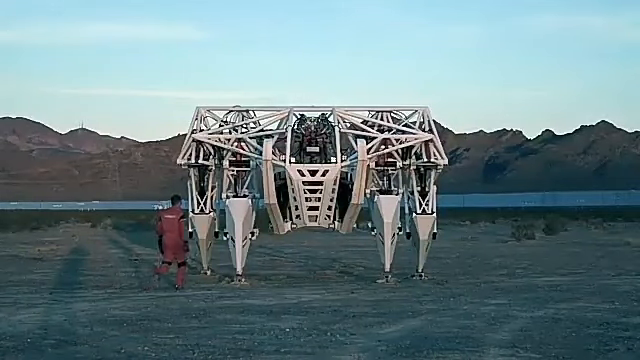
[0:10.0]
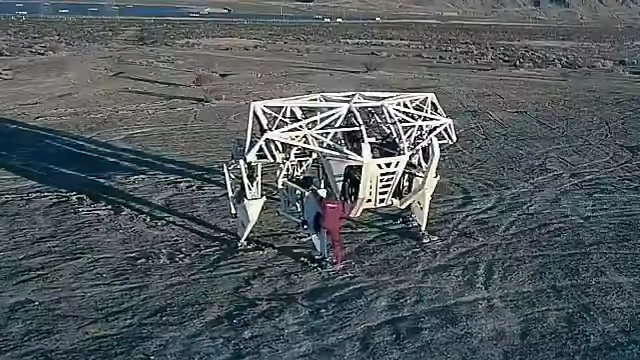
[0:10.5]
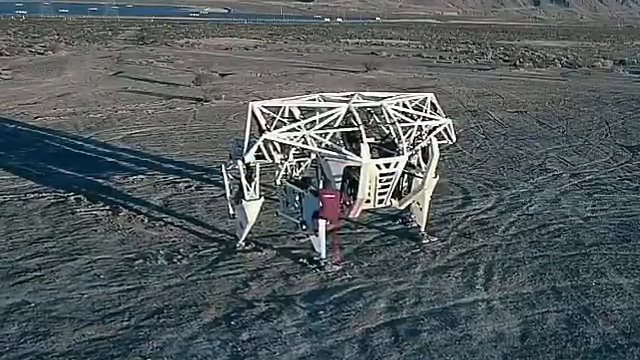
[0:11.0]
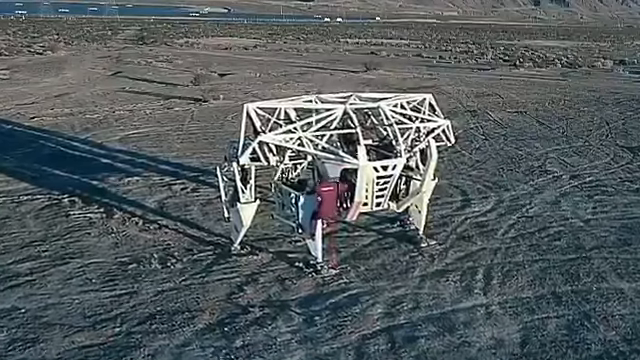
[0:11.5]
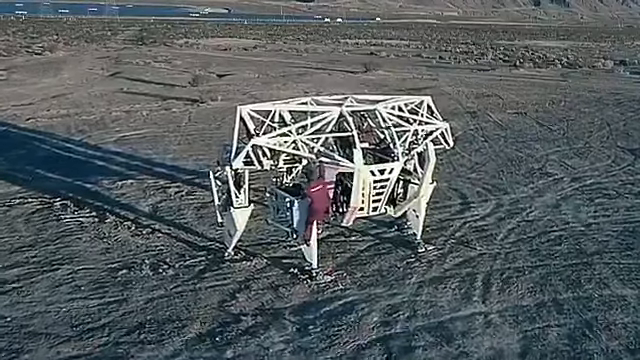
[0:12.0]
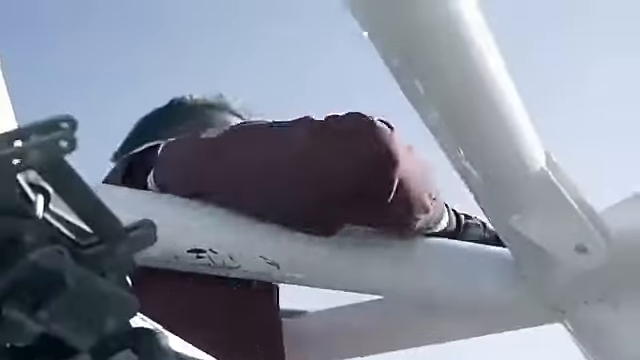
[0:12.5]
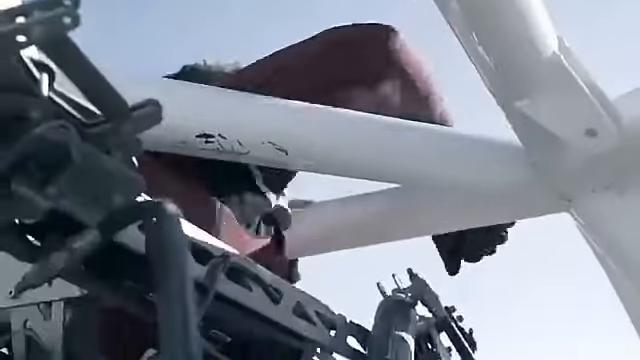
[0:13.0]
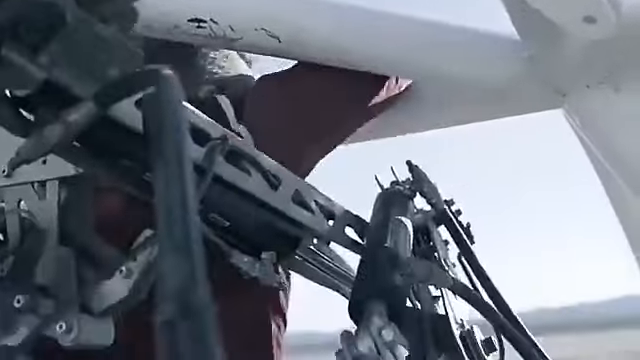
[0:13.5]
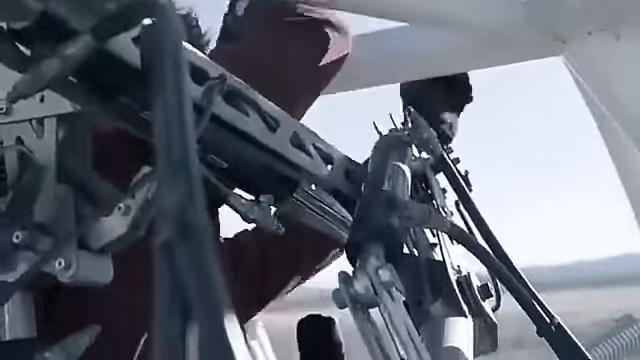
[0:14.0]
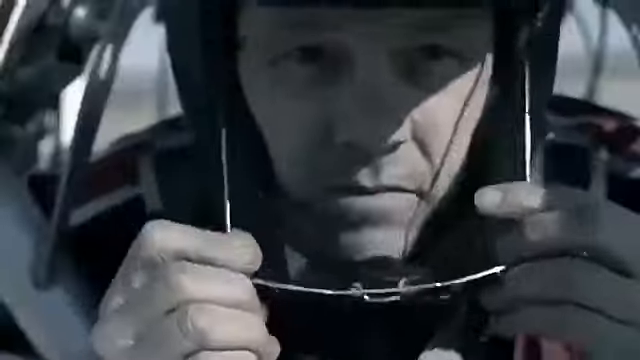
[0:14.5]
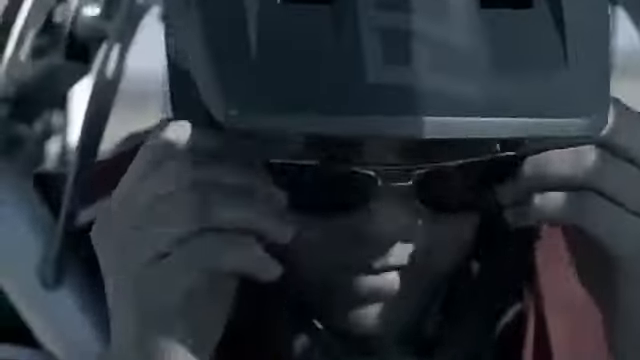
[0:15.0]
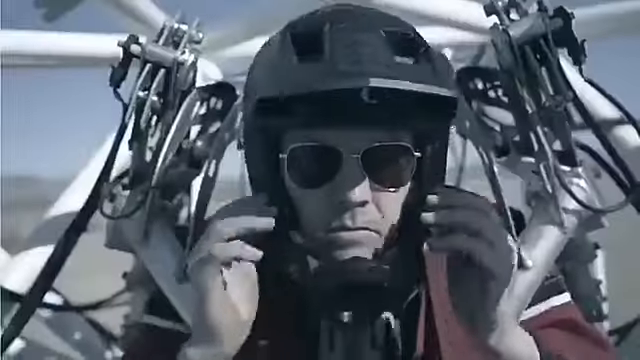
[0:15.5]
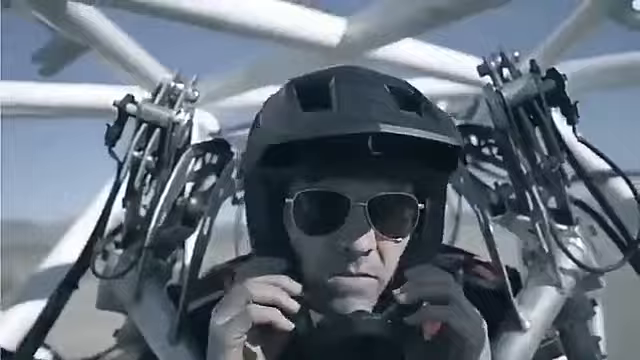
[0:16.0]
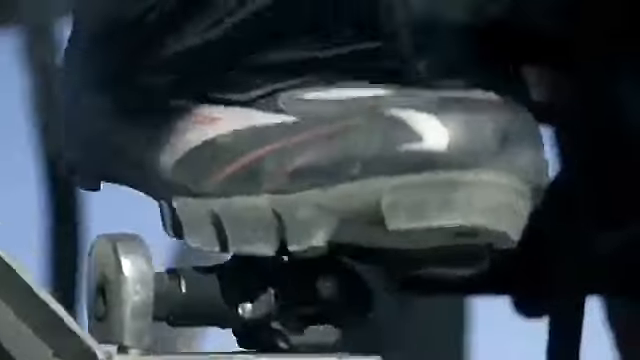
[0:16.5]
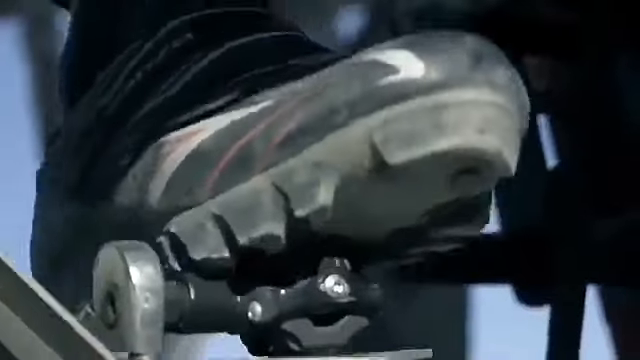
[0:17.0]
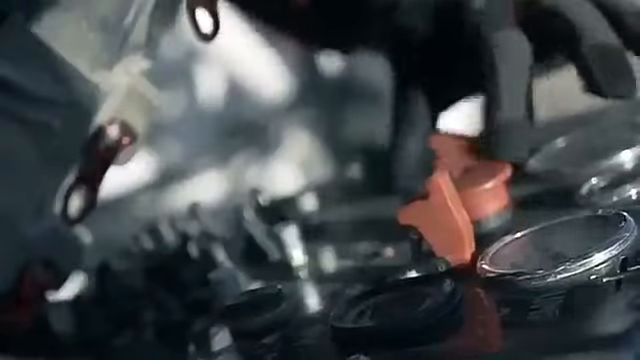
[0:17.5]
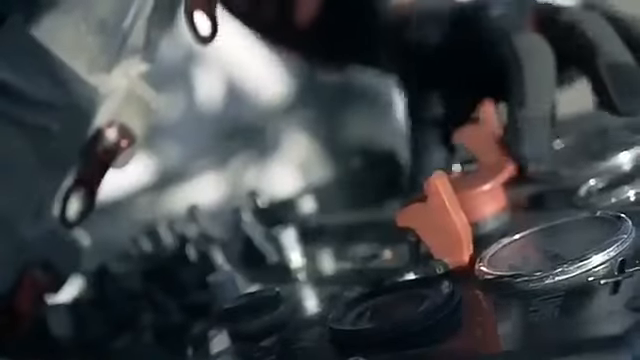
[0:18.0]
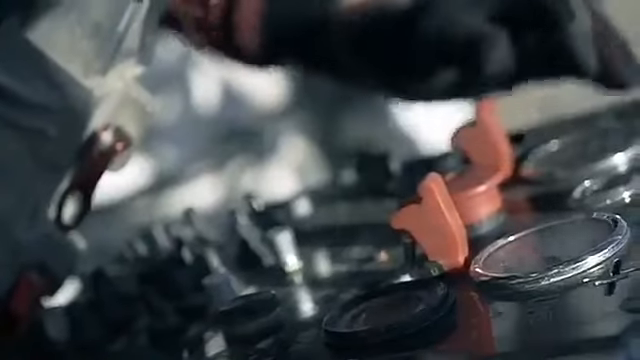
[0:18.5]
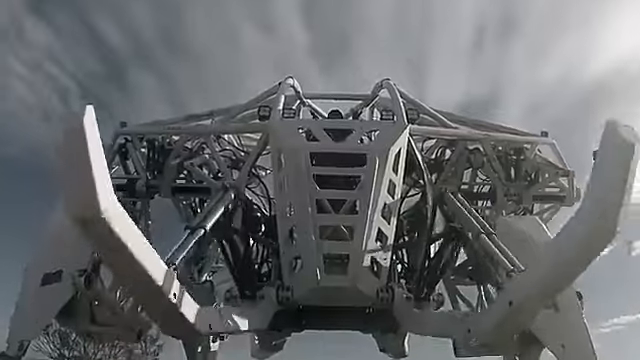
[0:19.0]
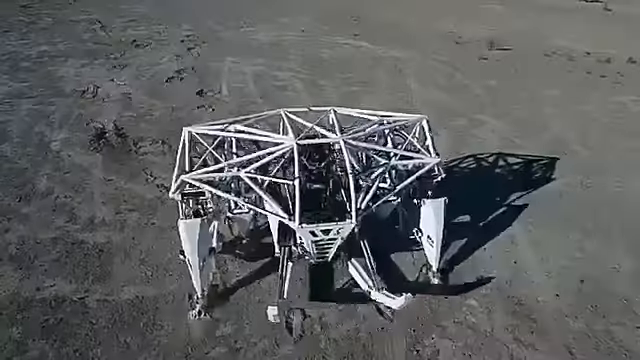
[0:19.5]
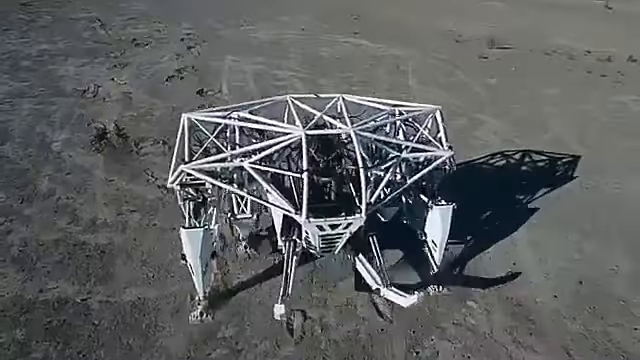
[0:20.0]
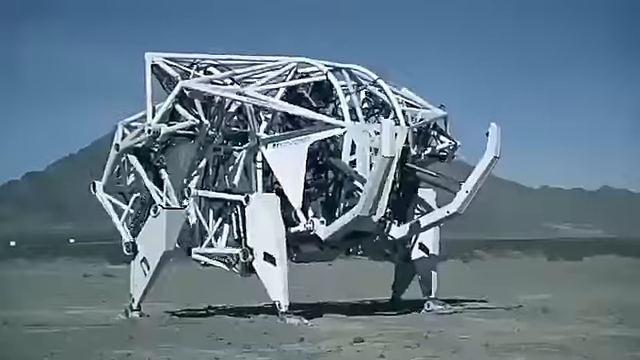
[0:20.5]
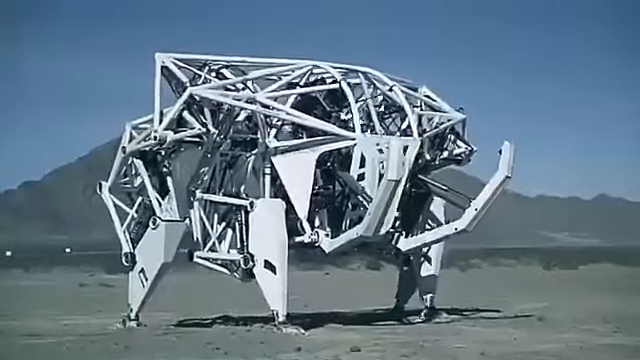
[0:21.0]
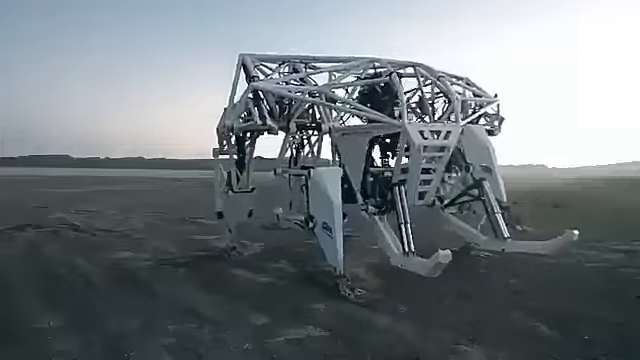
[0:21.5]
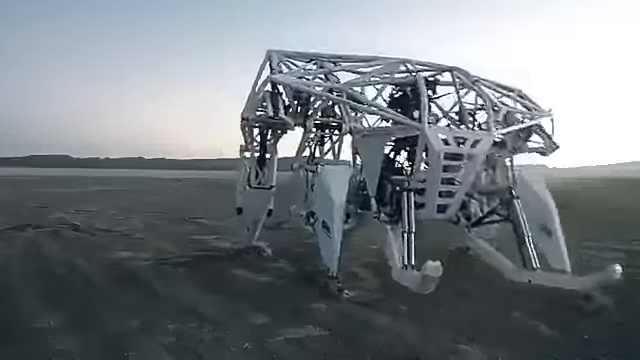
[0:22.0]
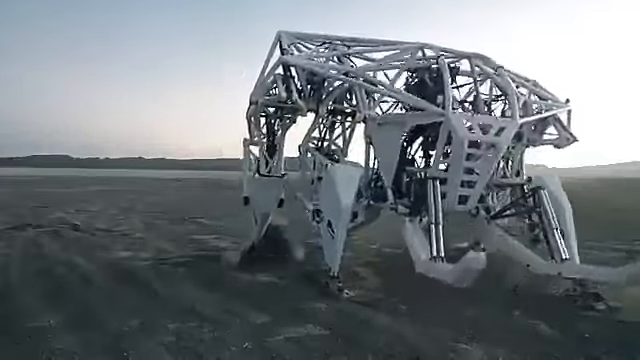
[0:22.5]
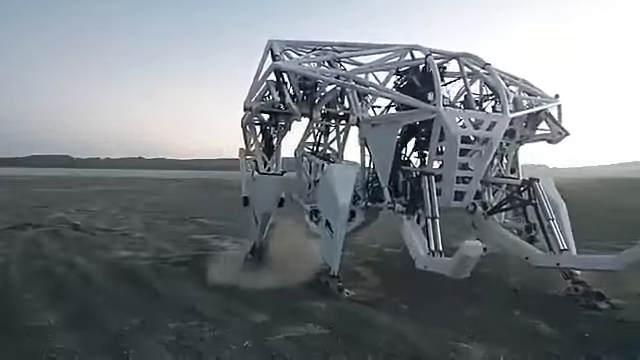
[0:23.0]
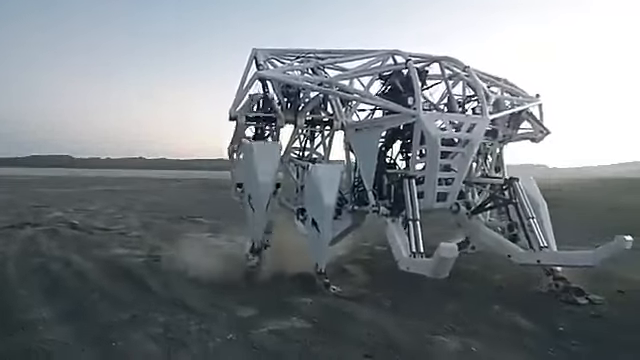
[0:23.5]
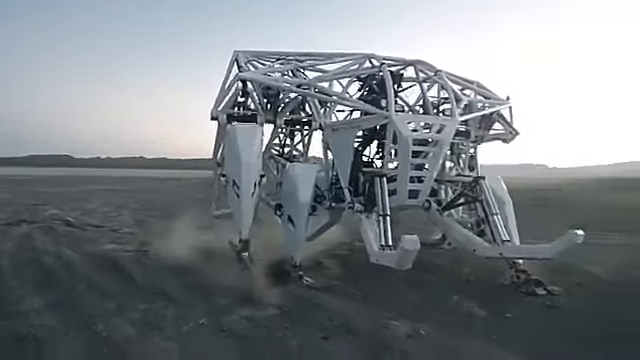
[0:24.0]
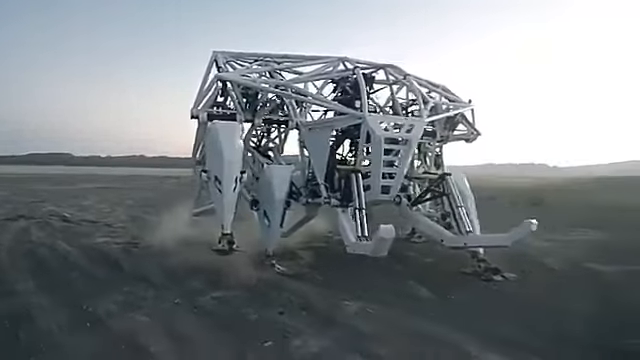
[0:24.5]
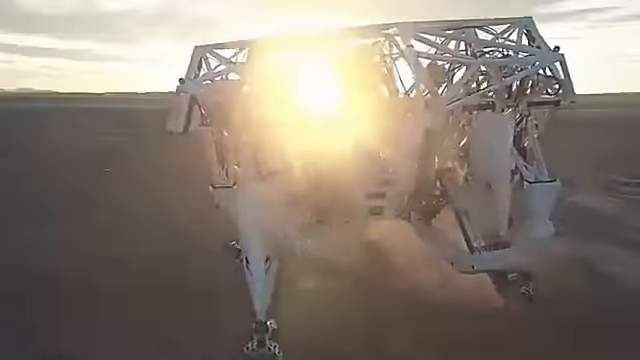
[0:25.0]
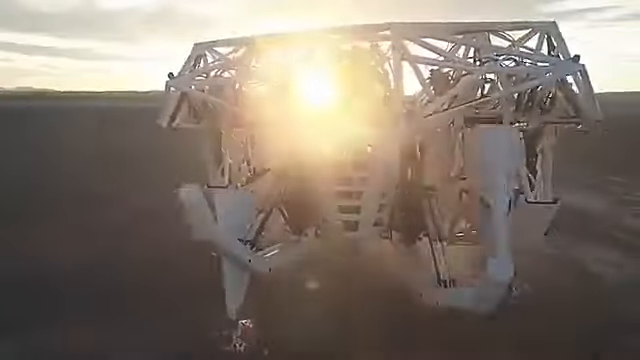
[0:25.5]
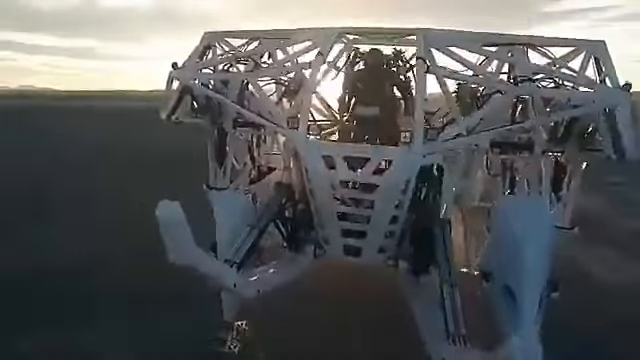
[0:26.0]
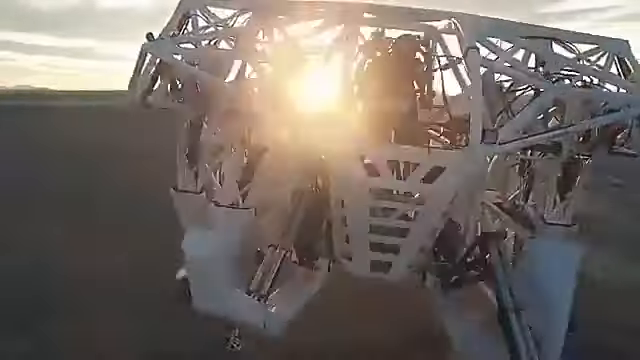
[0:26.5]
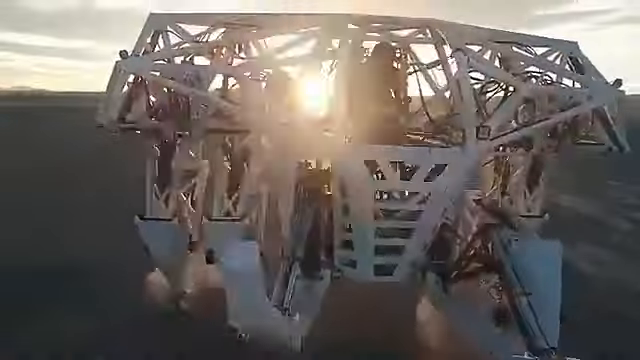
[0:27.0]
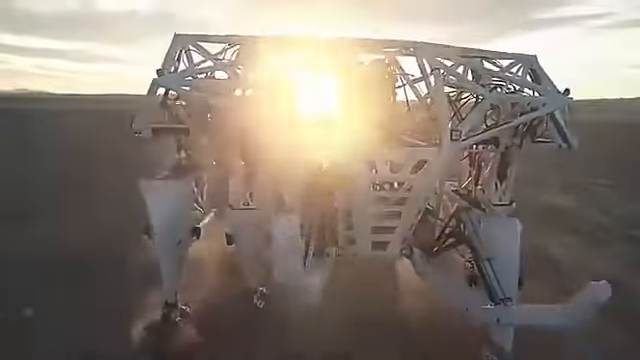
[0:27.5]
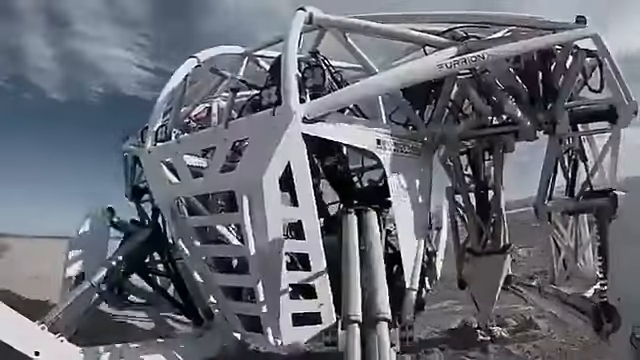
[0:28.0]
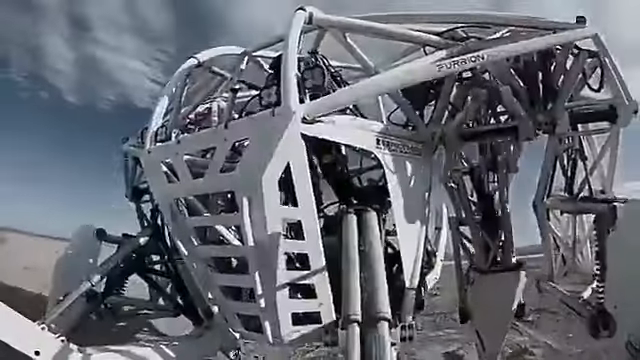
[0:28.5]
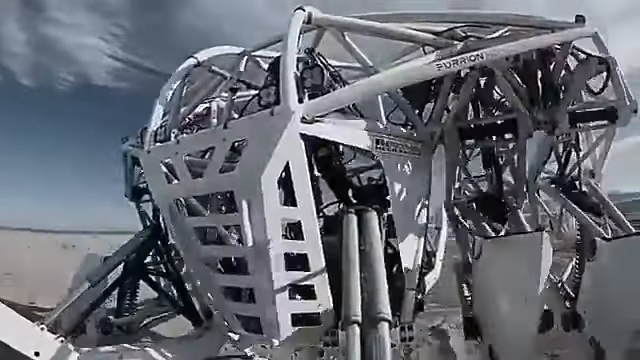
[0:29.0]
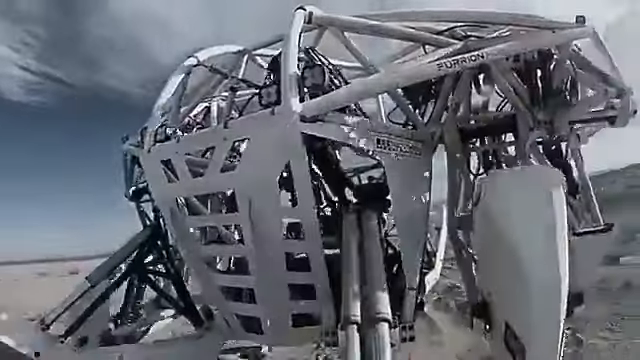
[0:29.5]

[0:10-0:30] The man gets into the giant mech. The inside looks cramped, with metal bars around him, and he is wearing a helmet. He puts his sunglasses on even though they were already on, straps himself in, puts his feet on pedals and presses a bunch of buttons. The mech then stands up, comes to life and begins walking around. The front of the machine has what appear to be forklift-style lift bars. The machine looks like it is controlled via the pedals.